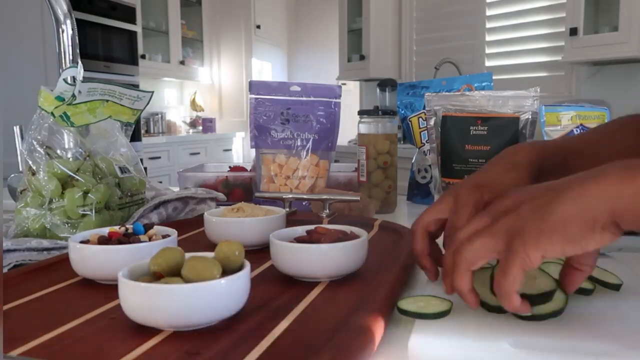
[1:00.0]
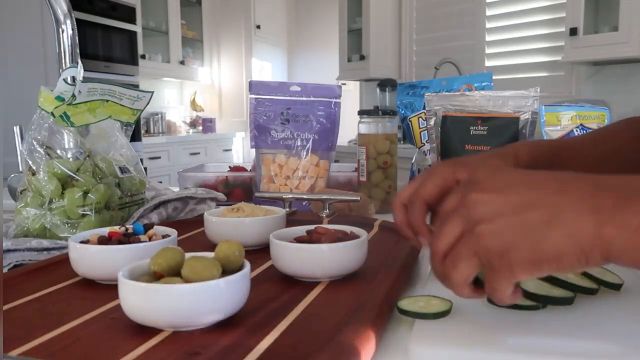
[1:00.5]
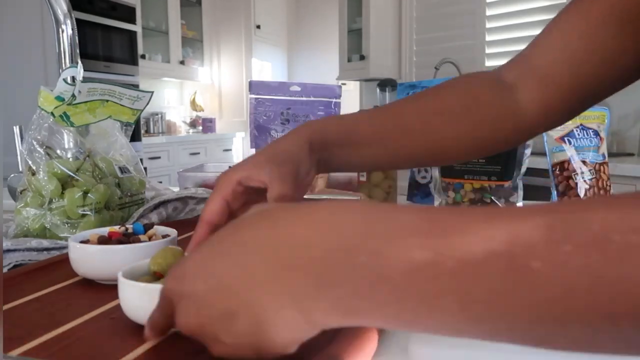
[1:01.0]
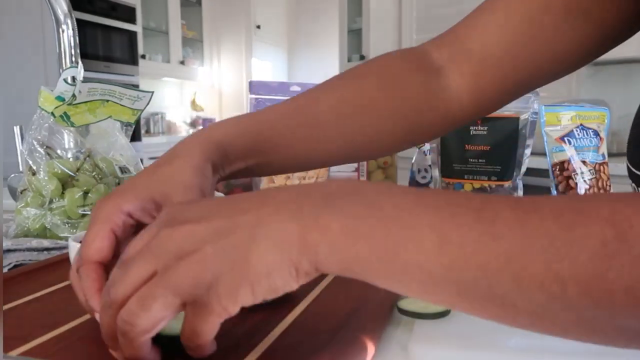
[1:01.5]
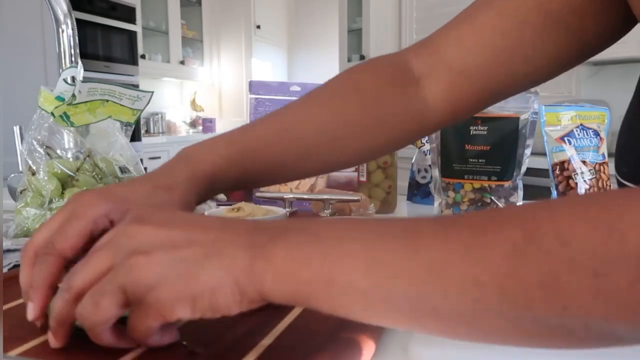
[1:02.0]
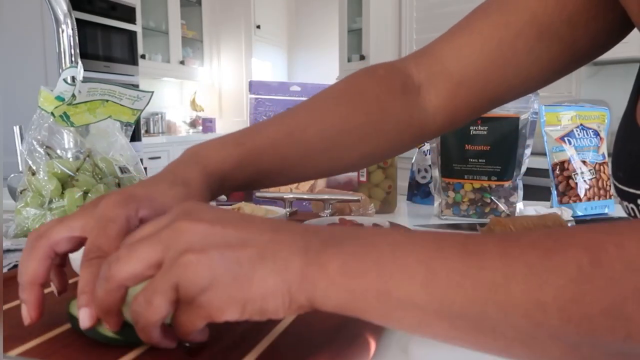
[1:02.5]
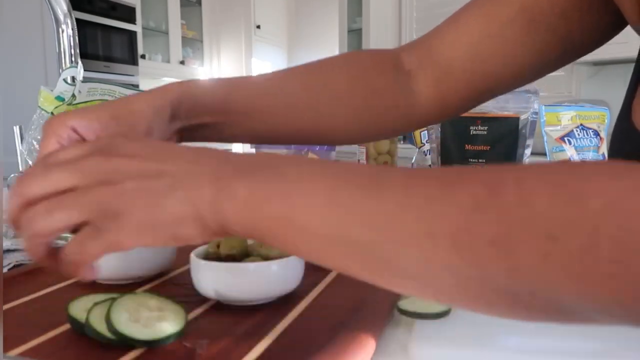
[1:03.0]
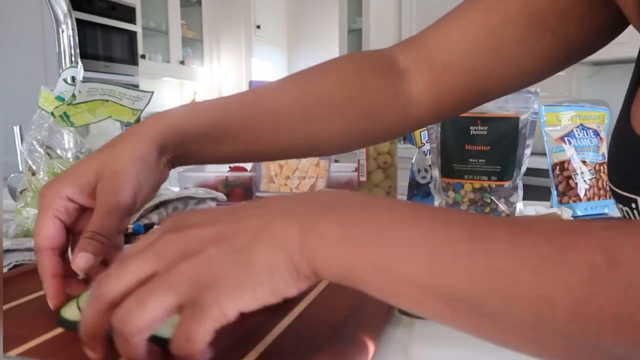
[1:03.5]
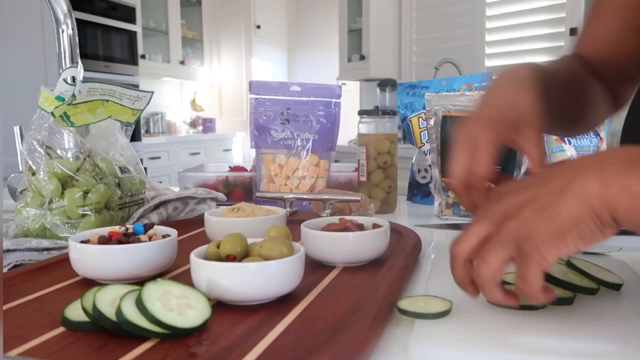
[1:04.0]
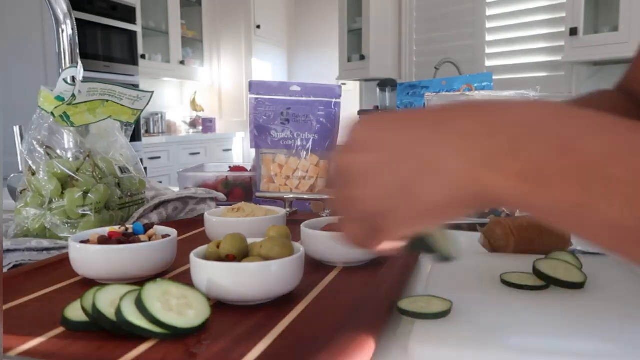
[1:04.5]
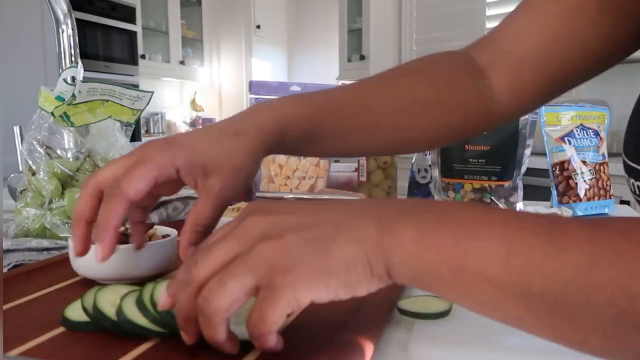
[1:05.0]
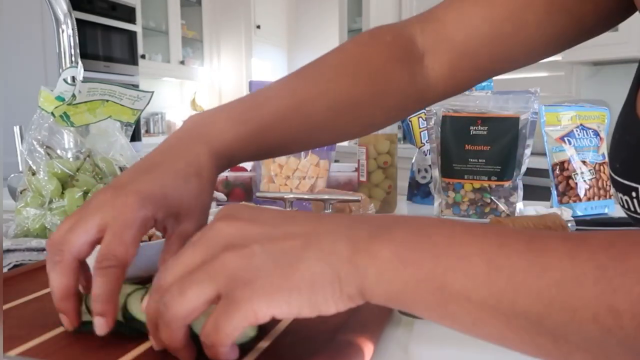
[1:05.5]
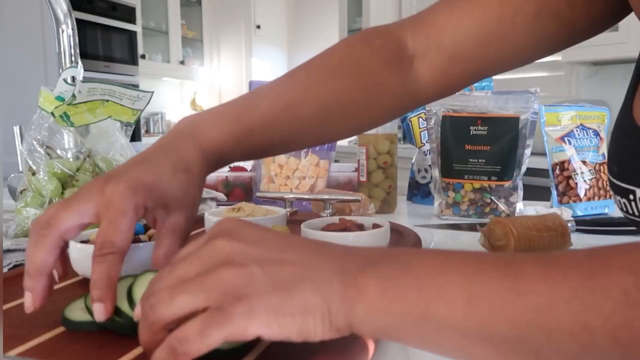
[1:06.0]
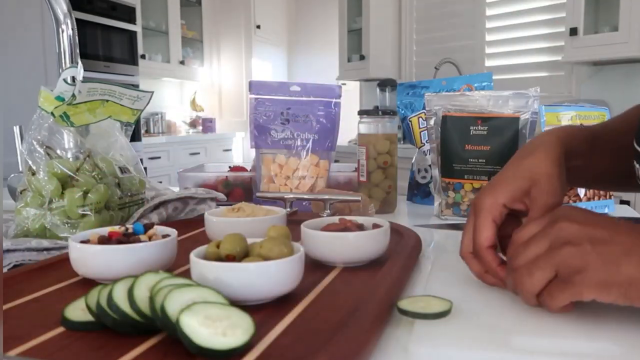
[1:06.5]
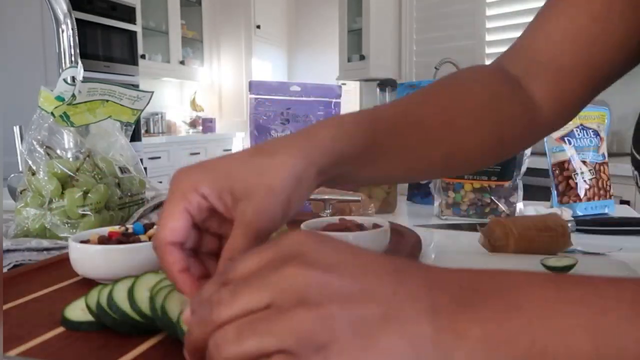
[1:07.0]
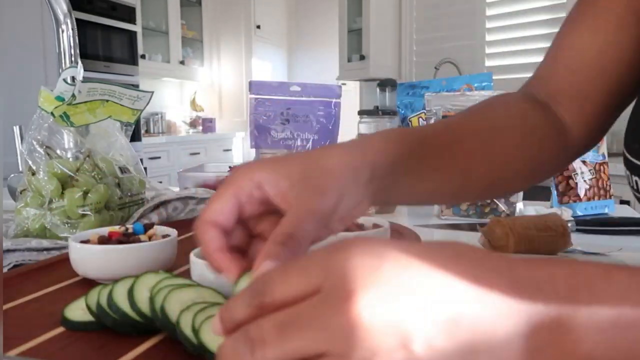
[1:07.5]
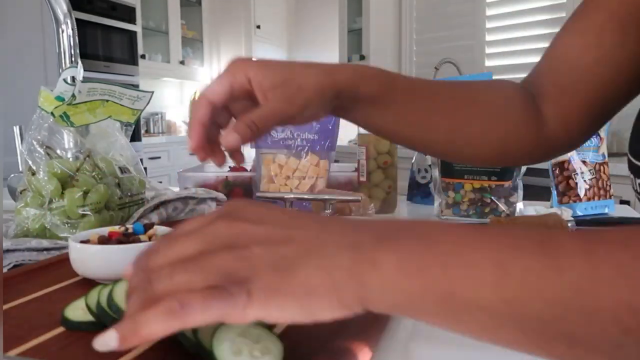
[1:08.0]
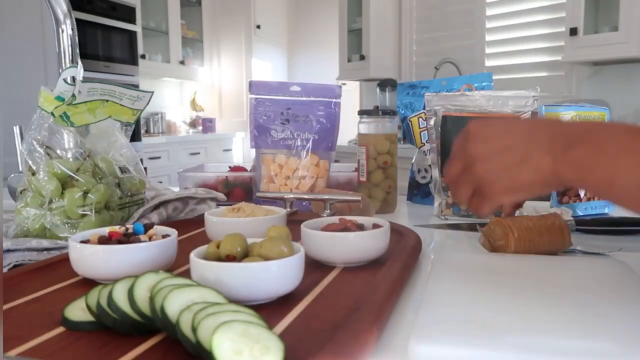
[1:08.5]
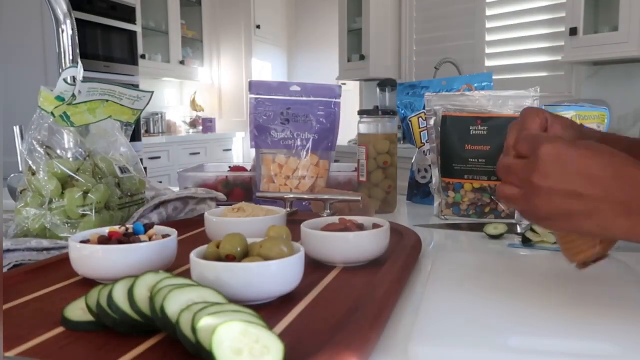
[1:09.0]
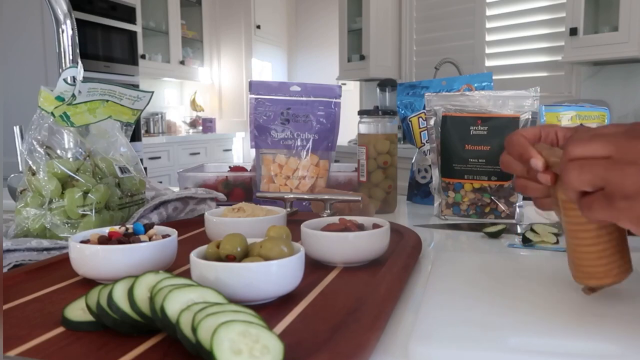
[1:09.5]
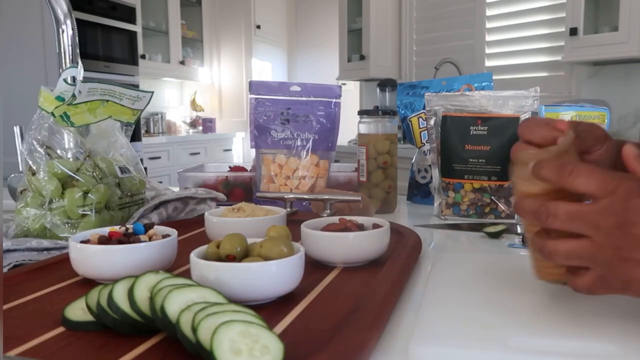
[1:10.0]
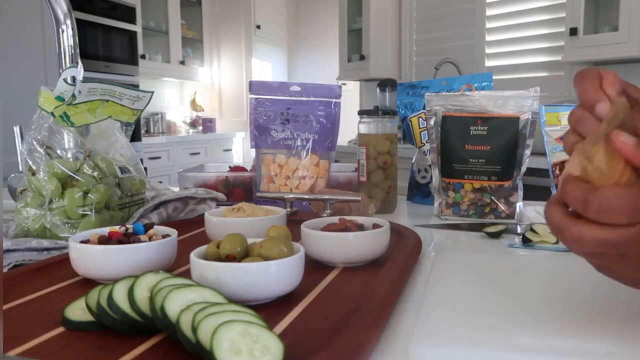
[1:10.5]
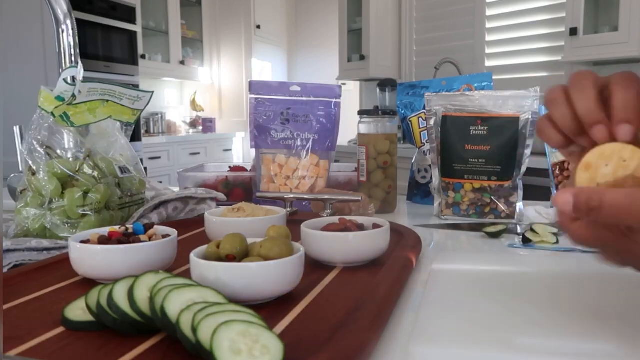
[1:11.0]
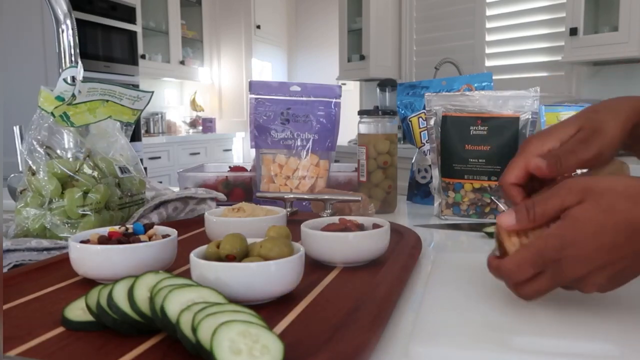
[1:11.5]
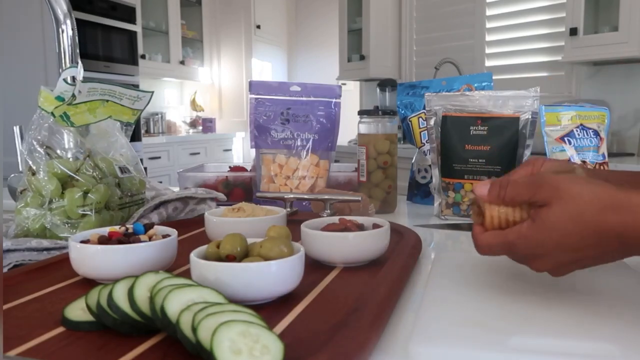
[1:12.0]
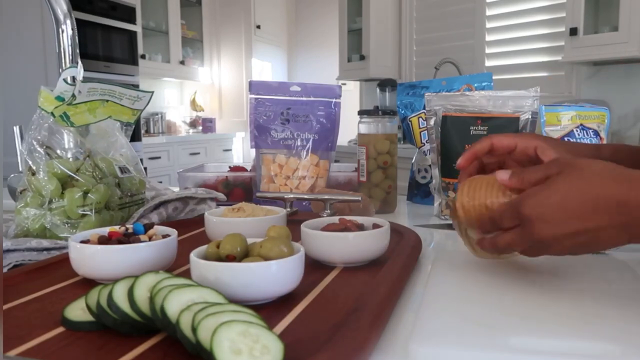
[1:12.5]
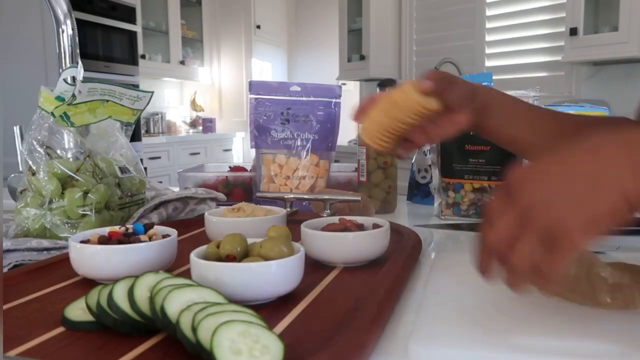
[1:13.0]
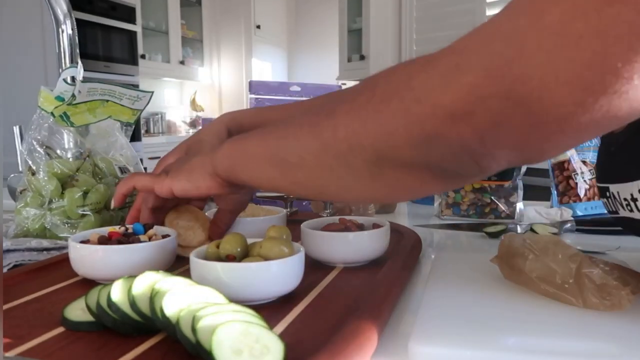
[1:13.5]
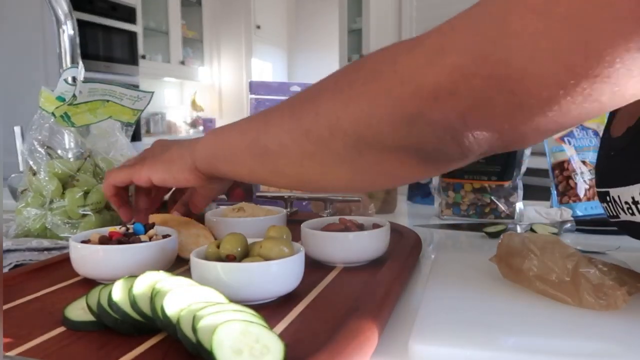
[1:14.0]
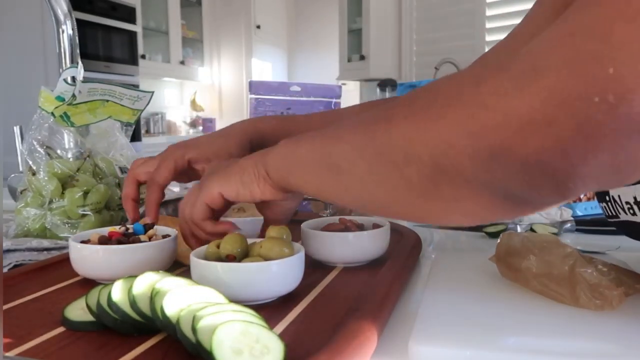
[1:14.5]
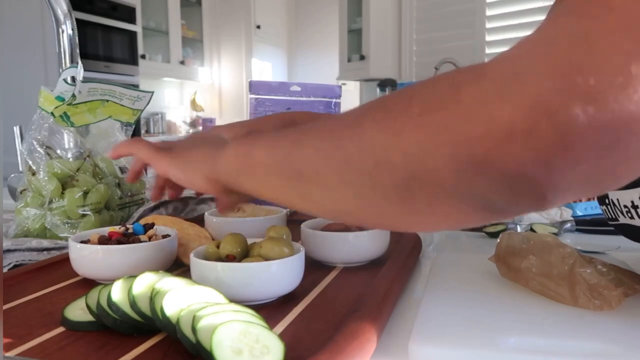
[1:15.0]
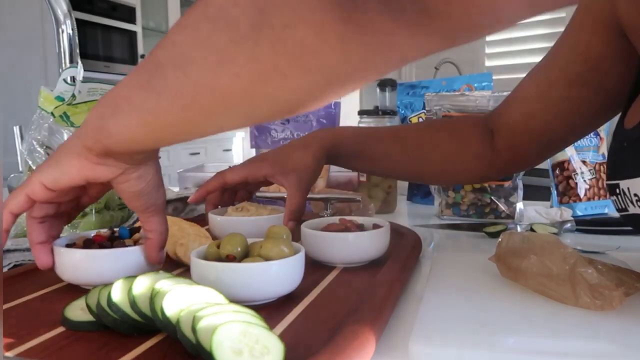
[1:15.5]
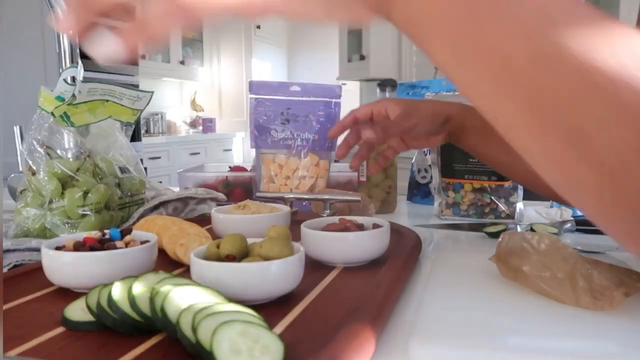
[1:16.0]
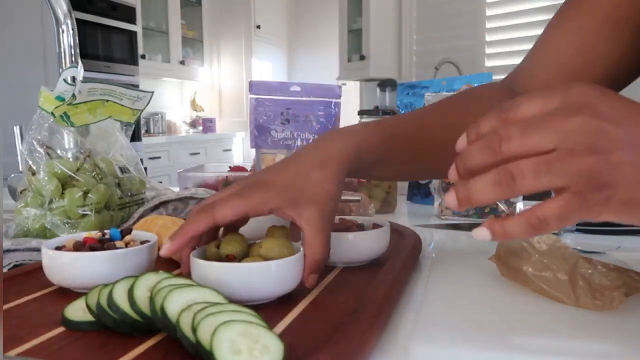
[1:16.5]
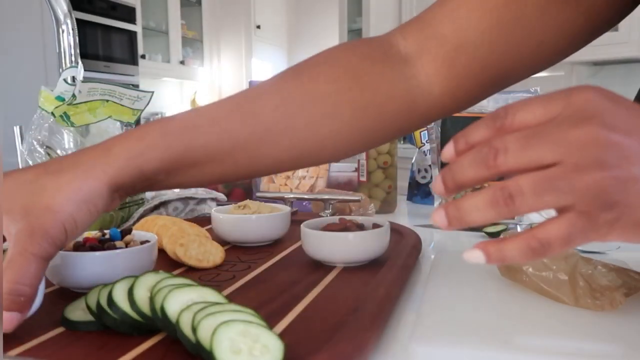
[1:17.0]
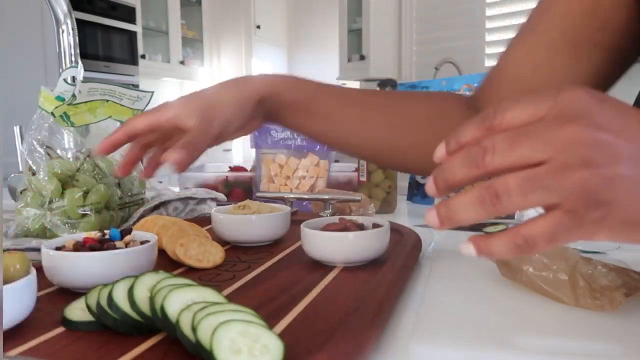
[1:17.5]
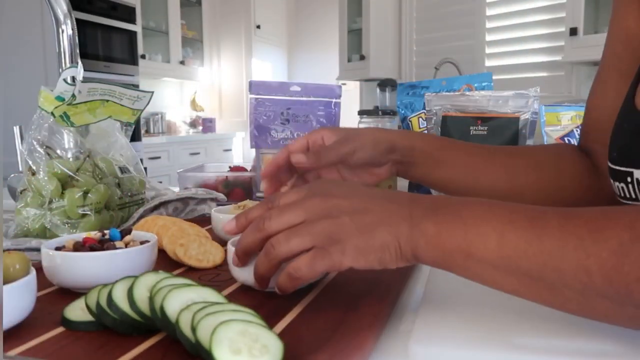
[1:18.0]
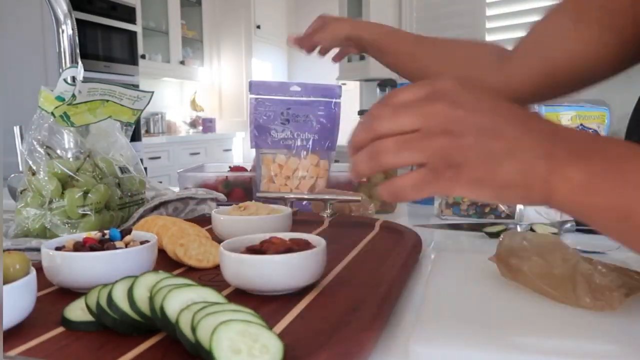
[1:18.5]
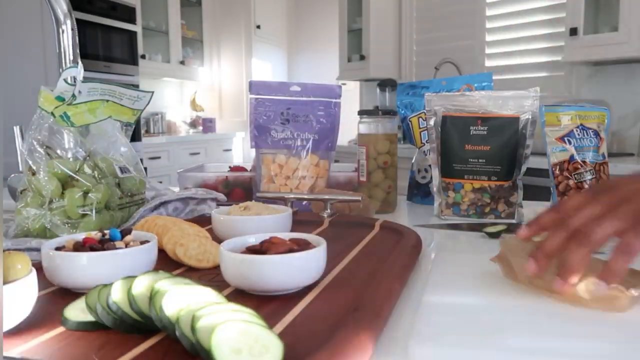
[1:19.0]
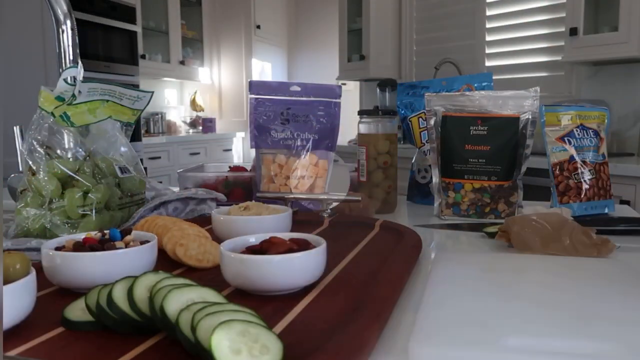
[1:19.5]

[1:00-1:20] The lady chops the cucumber. Four salad bowls are shown, holding grapes, olives, sweets, sauce and walnuts. On the kitchen counter there are grapes, a packet of pretzels, a packet of walnuts and a packet of sweets. The lady takes the chopped cucumbers and places them on the chopping board, then takes out the biscuits and places them on the chopping board too, arranging a setup. She wears a black and white top, and she also puts strawberries on top of the chopping board. The lady stands in the kitchen, which has white counters, white cupboards, a kitchen blind, a blender, a kitchen tap, white walls, a microwave and an oven.